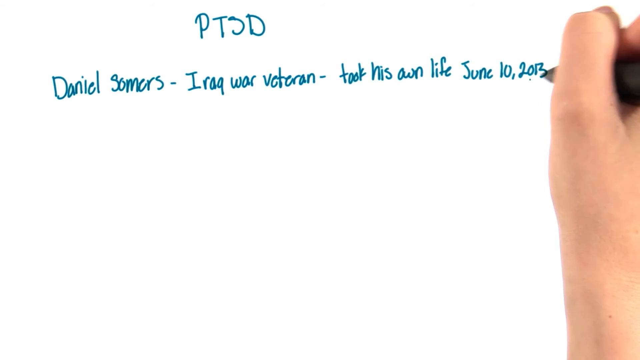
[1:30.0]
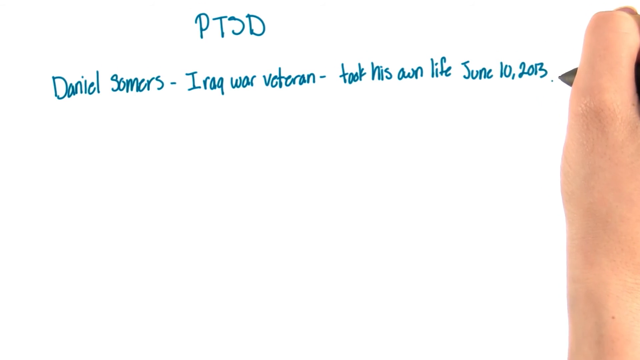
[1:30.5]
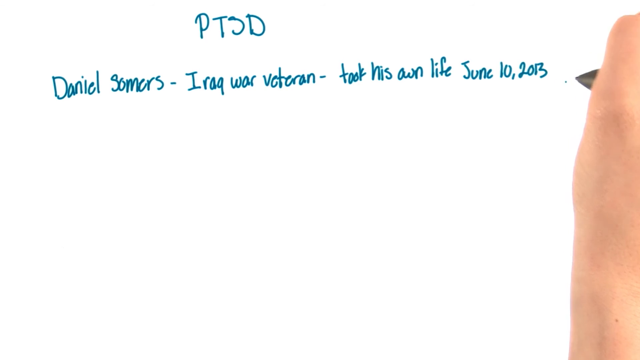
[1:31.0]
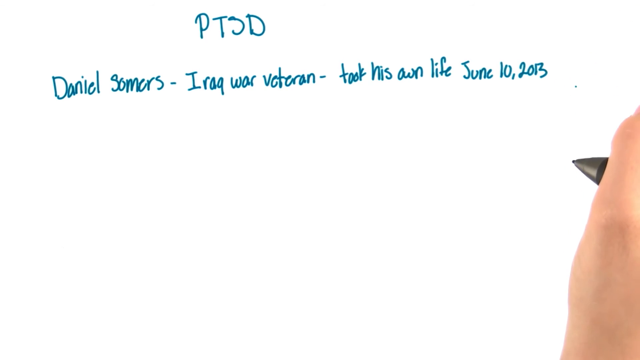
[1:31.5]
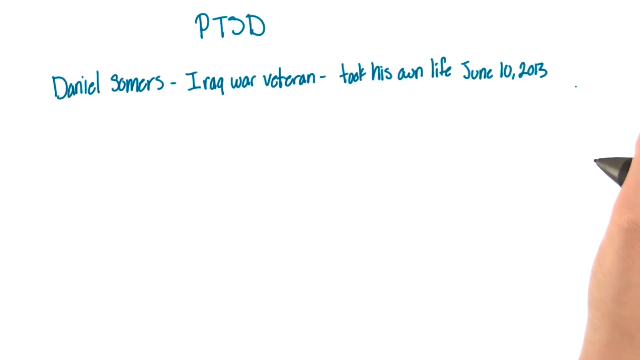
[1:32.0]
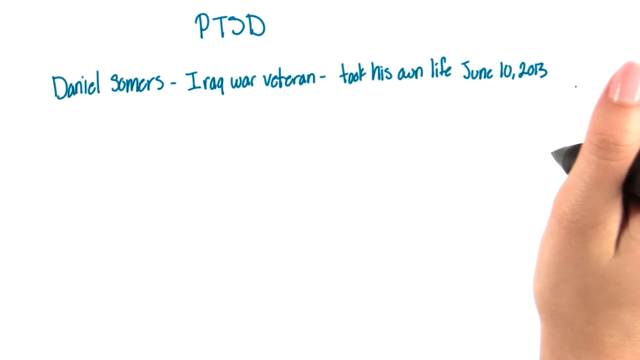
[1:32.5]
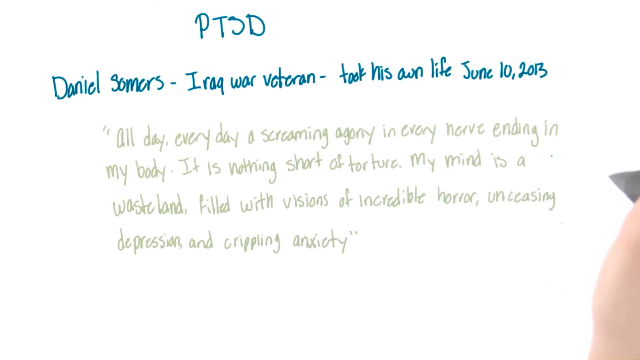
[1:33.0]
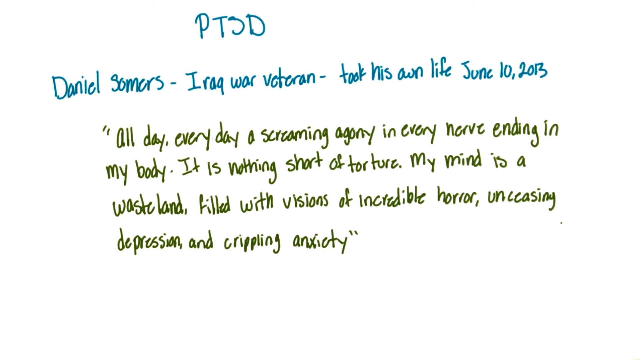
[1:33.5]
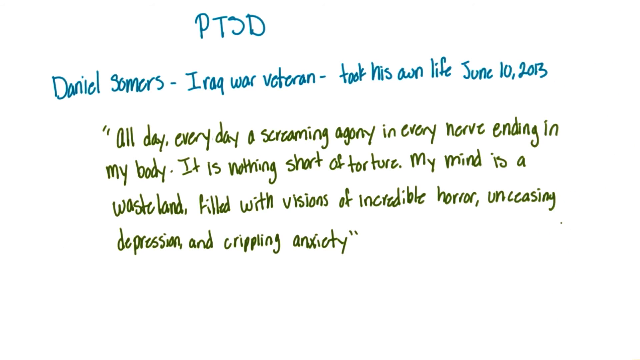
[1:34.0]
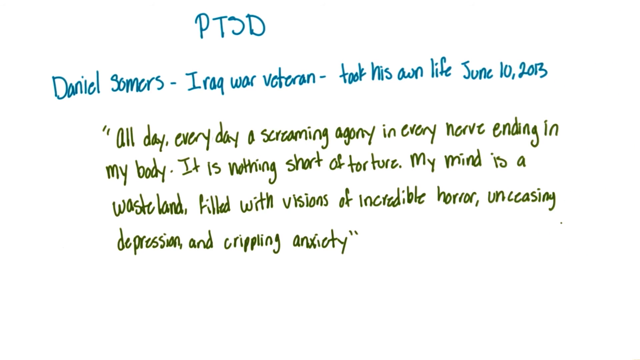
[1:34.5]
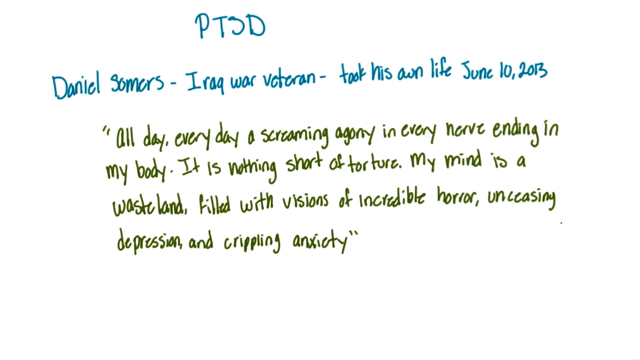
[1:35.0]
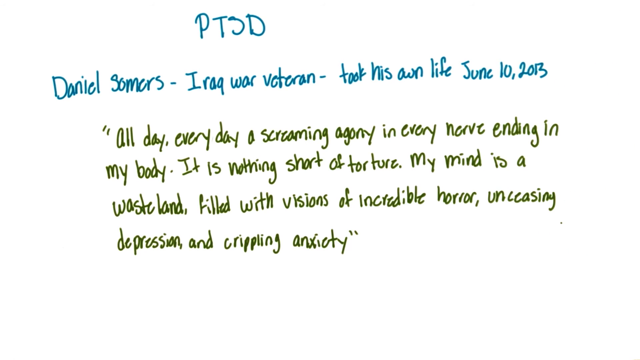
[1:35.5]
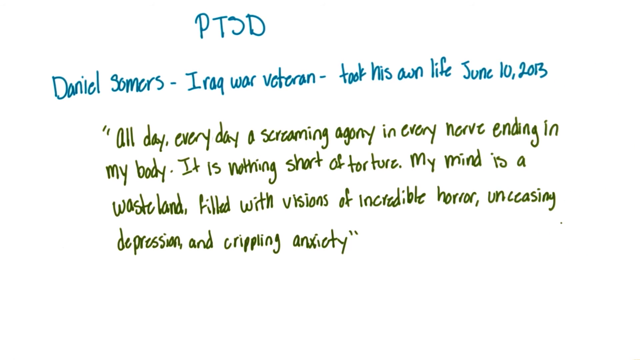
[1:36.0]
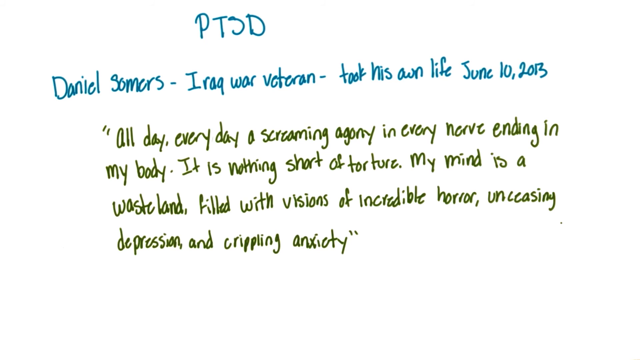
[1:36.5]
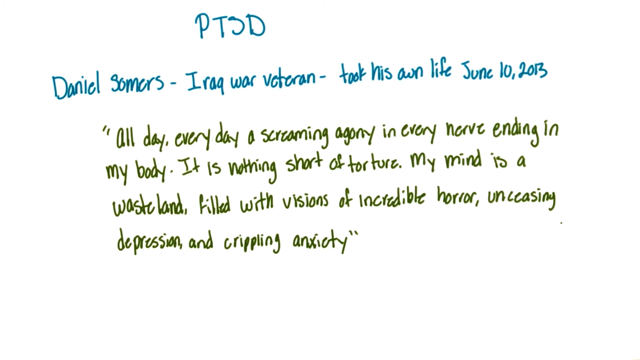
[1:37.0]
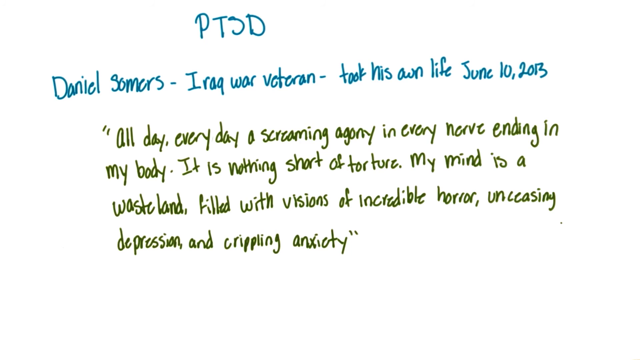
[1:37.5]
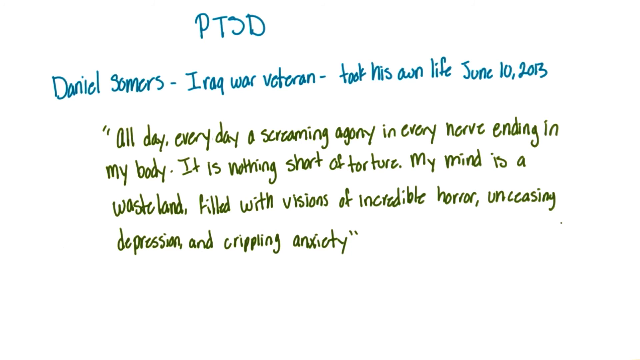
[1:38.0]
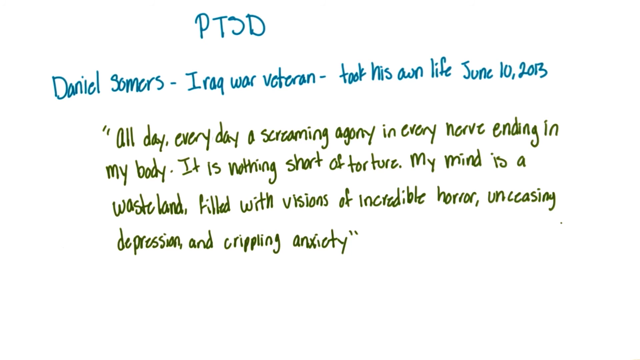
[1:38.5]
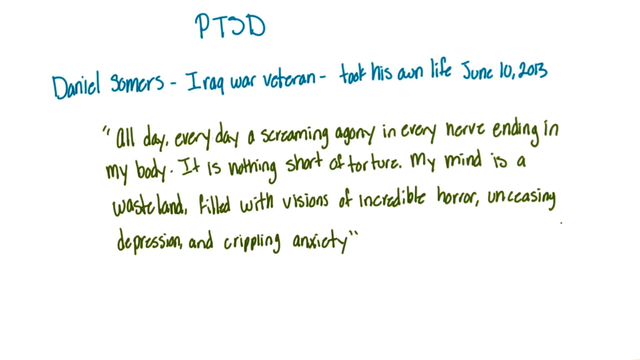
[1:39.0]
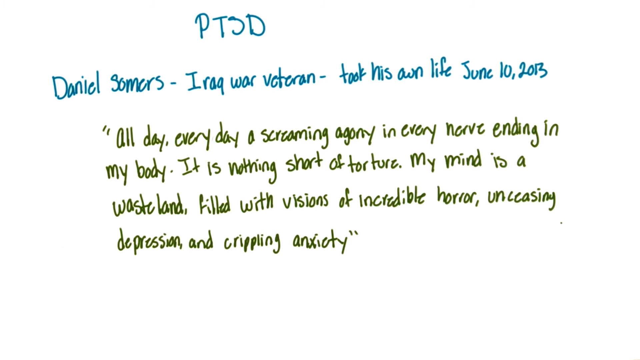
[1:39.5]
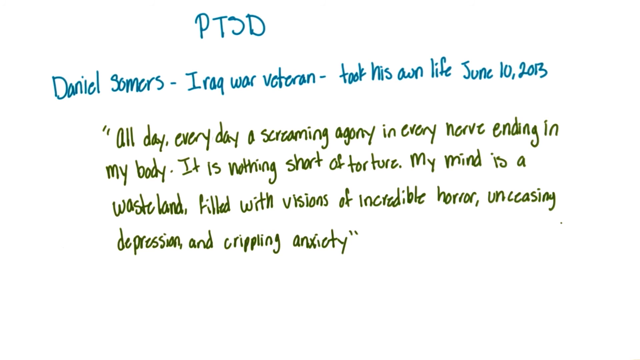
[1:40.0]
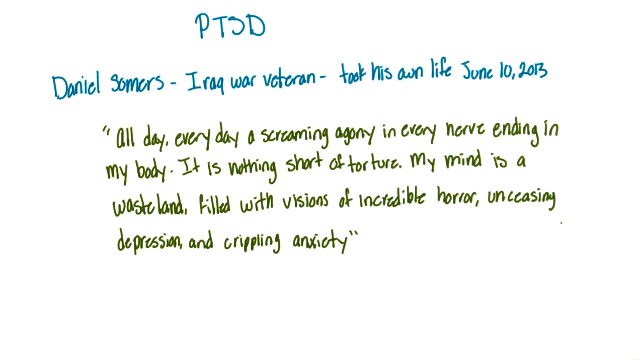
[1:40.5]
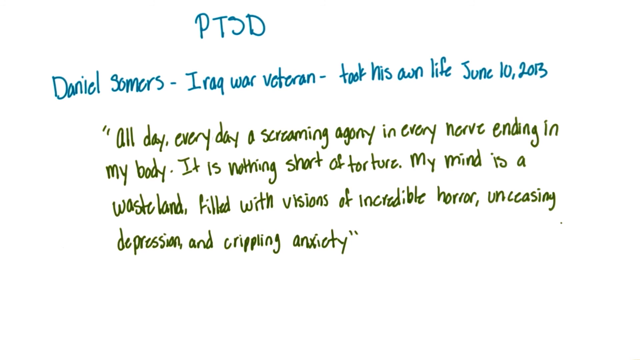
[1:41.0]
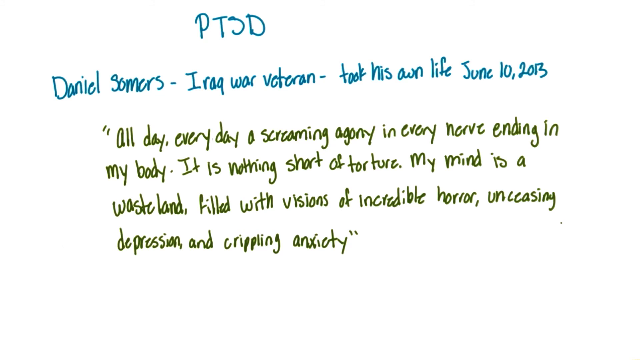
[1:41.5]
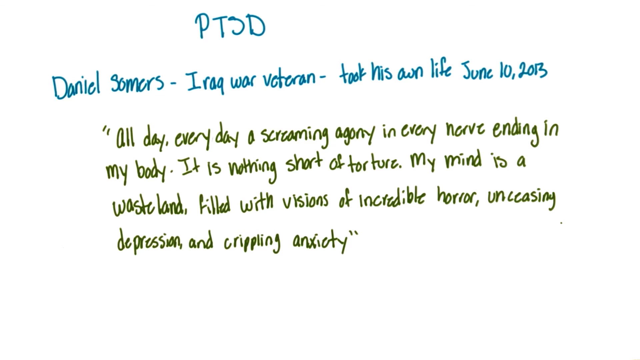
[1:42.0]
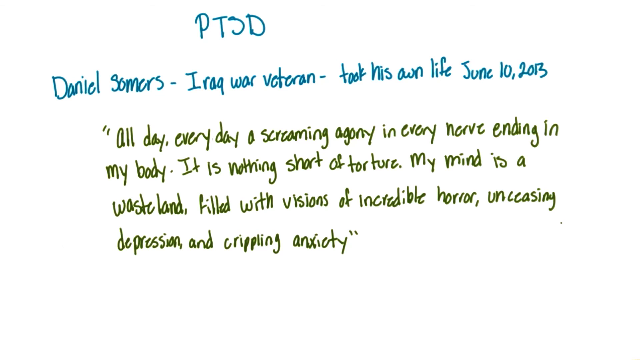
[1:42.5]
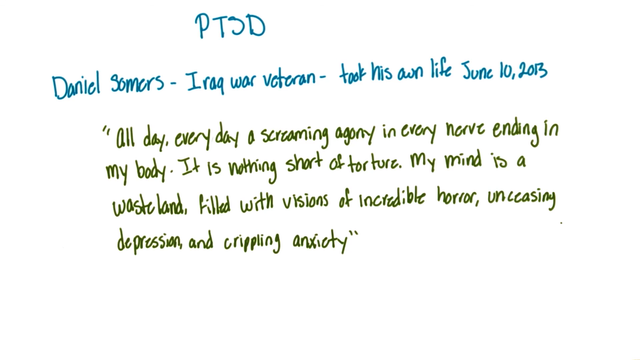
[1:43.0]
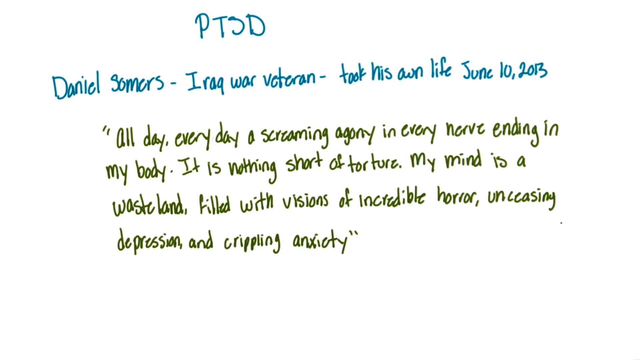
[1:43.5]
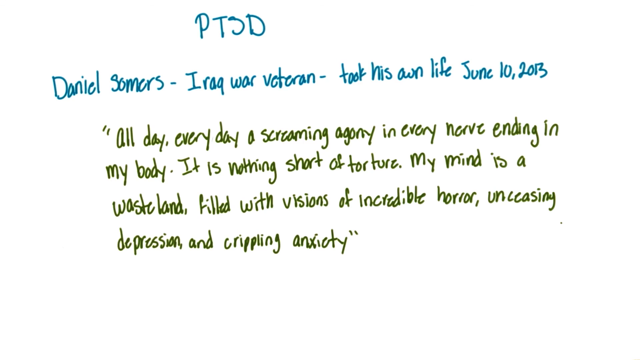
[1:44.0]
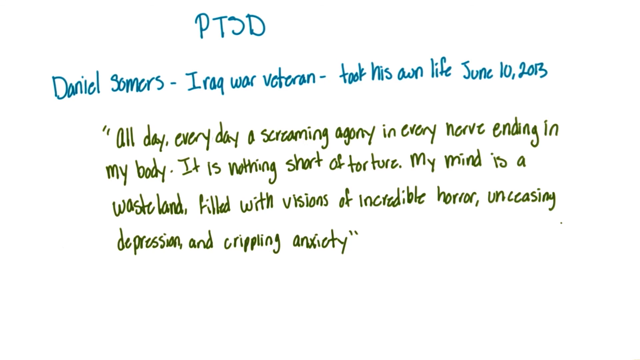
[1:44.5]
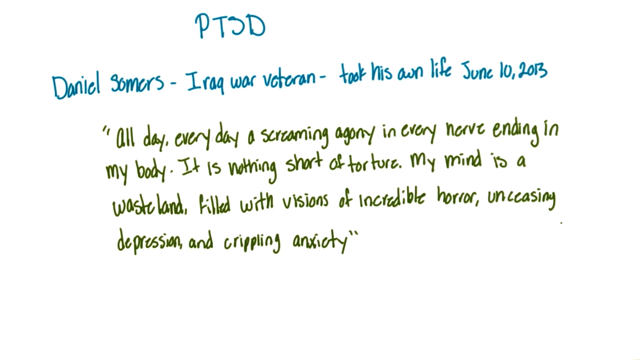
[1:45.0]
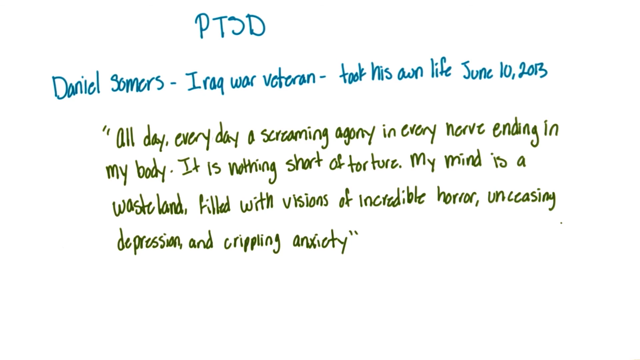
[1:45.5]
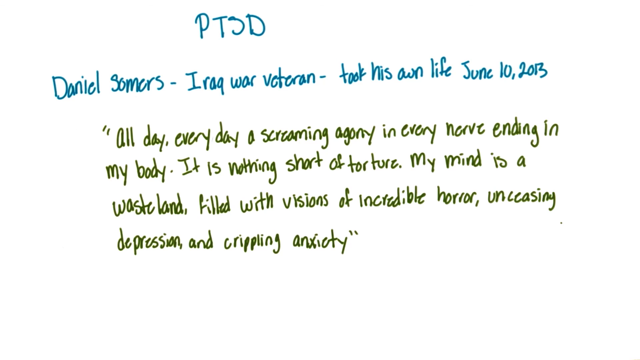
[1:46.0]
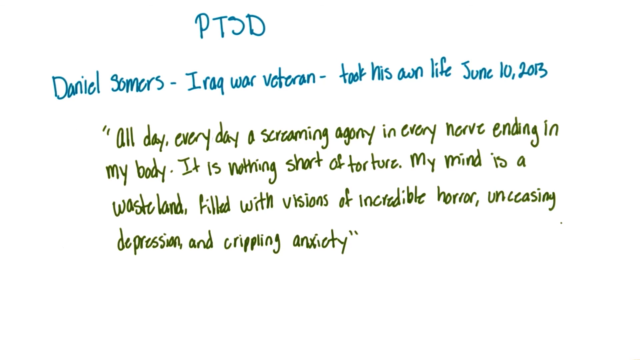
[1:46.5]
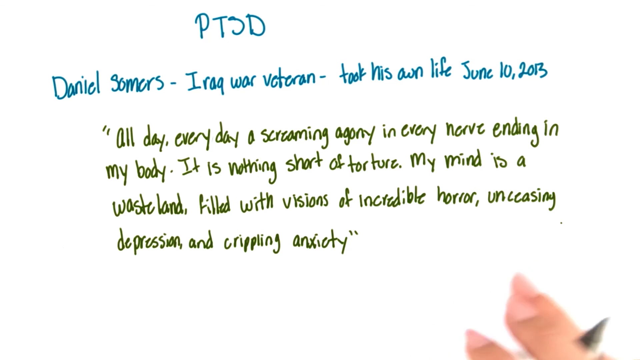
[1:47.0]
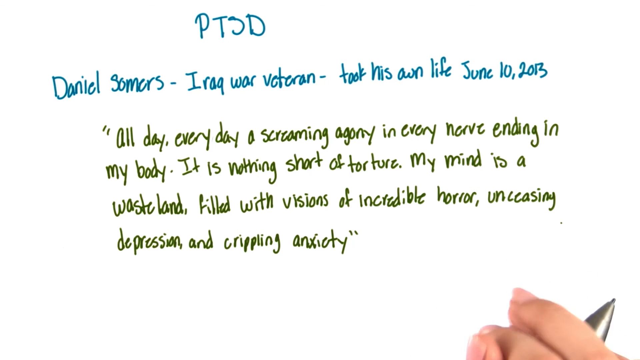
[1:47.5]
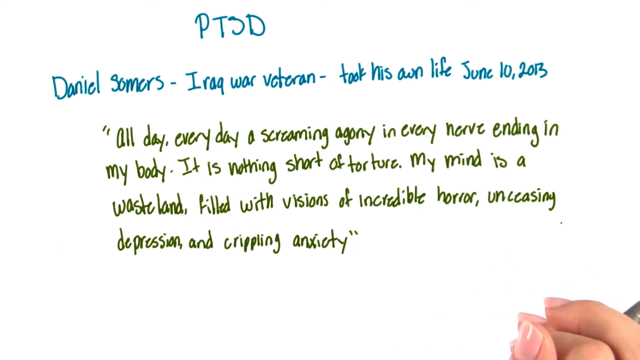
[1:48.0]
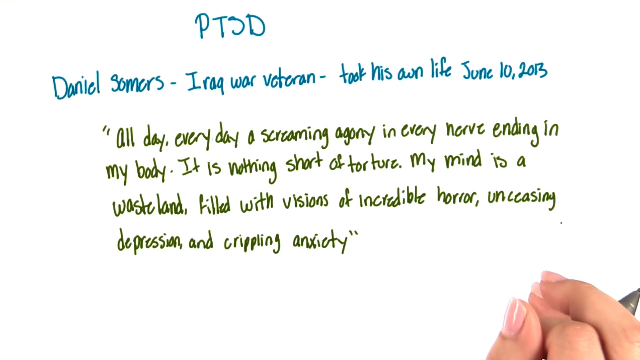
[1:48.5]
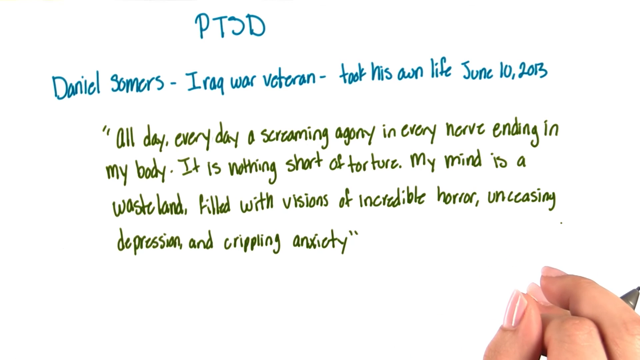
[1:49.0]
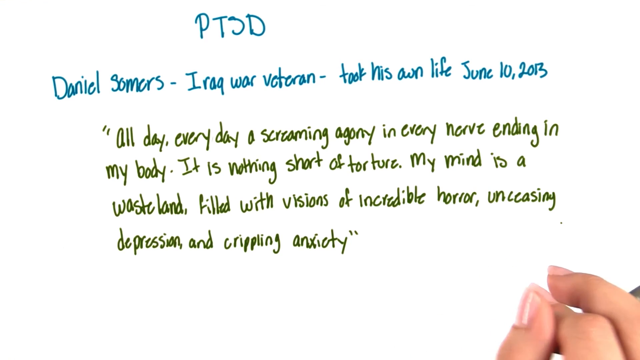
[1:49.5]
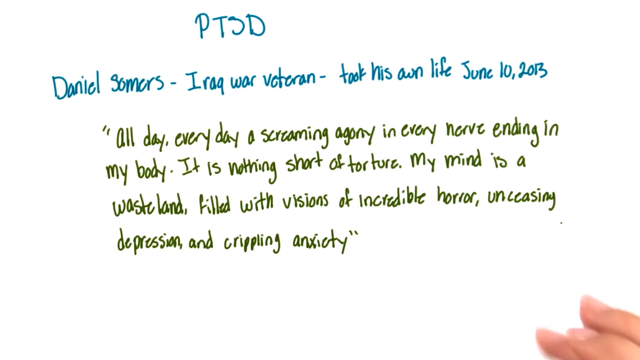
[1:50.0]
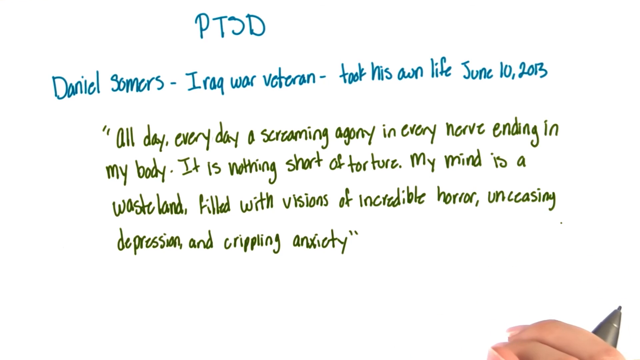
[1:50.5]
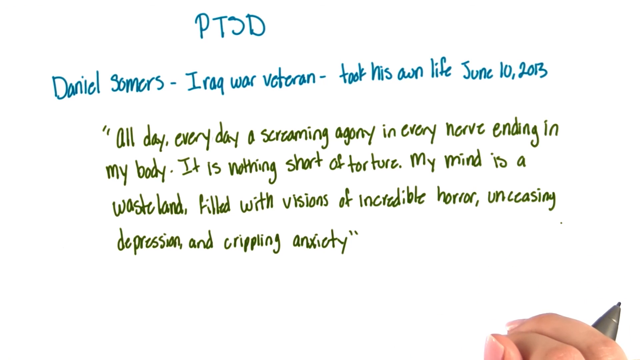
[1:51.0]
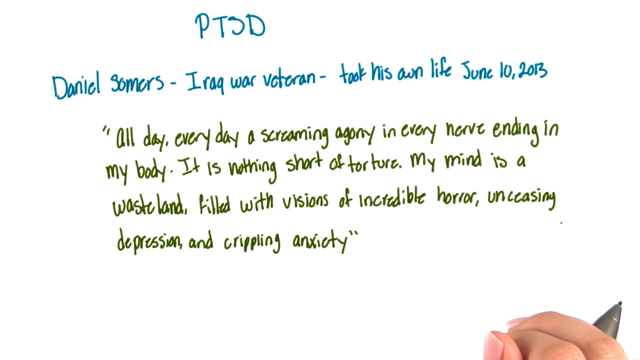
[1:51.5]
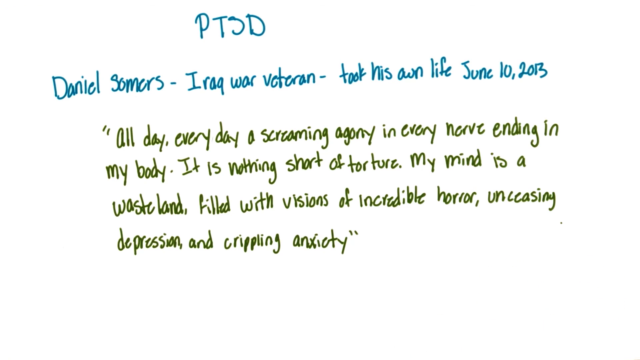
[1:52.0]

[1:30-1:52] The writing is finished, and the hand goes mostly off the right side, leaving a little of the silver pen tip and a little of the grip coming in about the center from the right, along with the side of the thumb but not the thumbnail. The hand moves back in so the thumbnail is slightly visible, then goes off the page. Underneath, directly under "Somers," is a quotation in black: "all day every day a screaming agony in every nerve ending in my body it is nothing short of torture. My mind is a wasteland filled with visions of incredible horror, unceasing depression, and crippling anxiety." It is four lines long; the first three run all the way across from left to right, and the bottom one is about half their length. A little of the hand comes in at the bottom right corner, showing the first two fingernails, the thumbnail and a little of the fingers, just barely in the corner. The fingers move down a little, revealing the silver tip of the pen pointing up to the right, and the fingers remain just barely in at the bottom right.